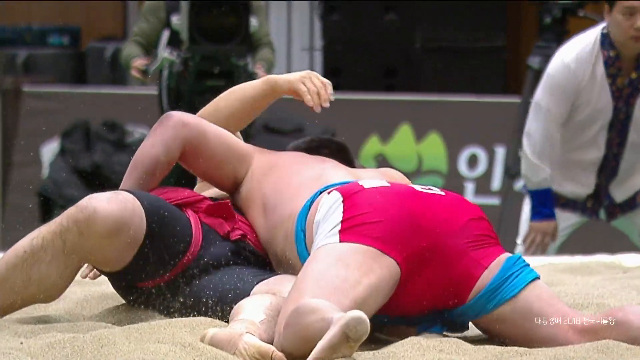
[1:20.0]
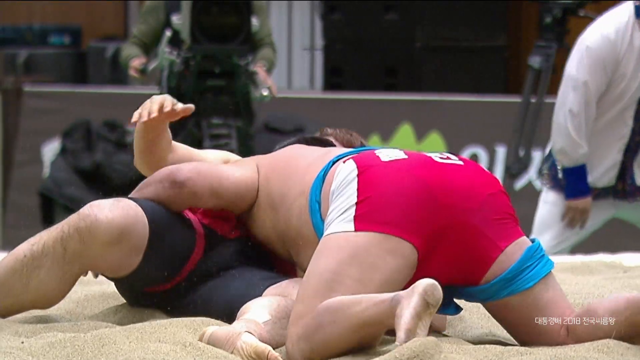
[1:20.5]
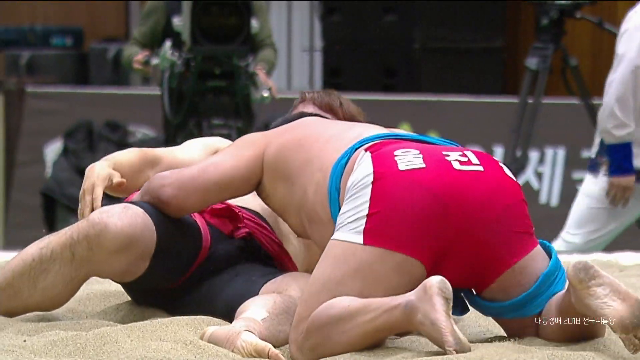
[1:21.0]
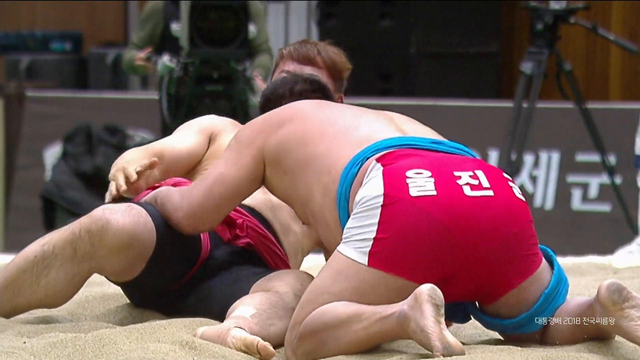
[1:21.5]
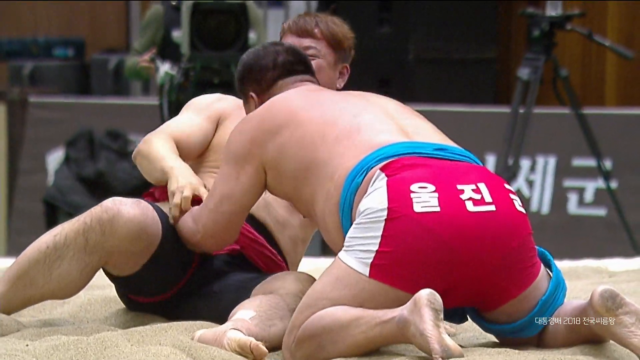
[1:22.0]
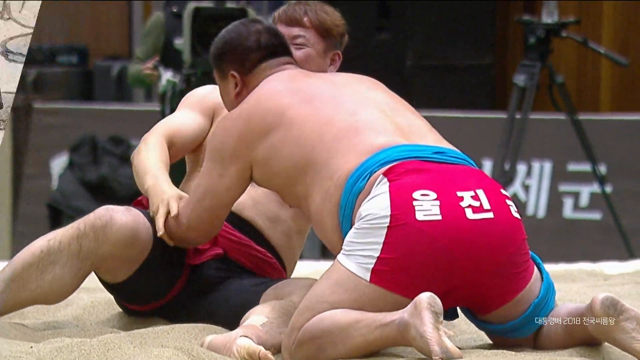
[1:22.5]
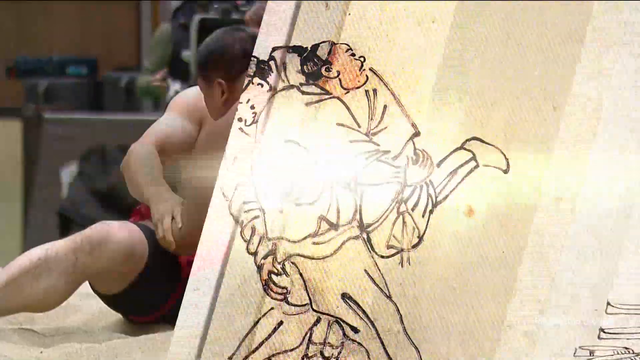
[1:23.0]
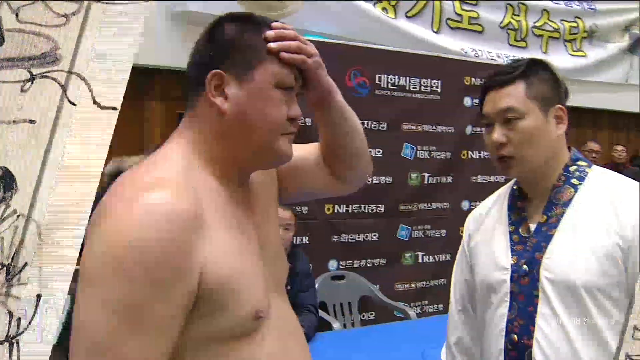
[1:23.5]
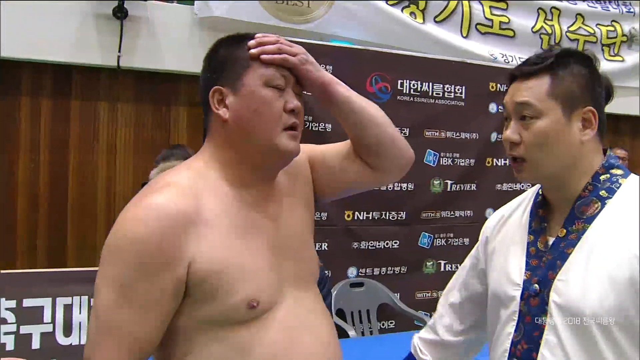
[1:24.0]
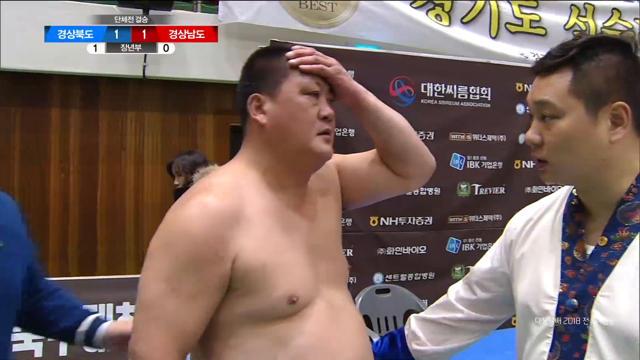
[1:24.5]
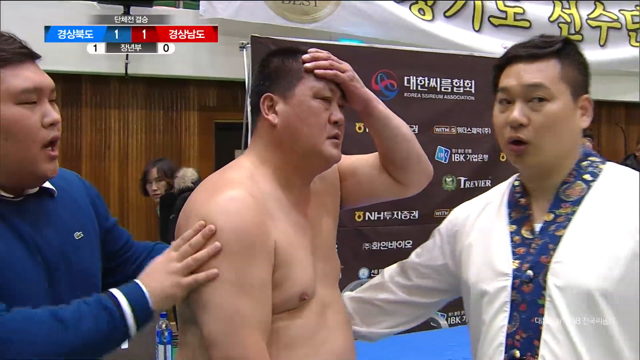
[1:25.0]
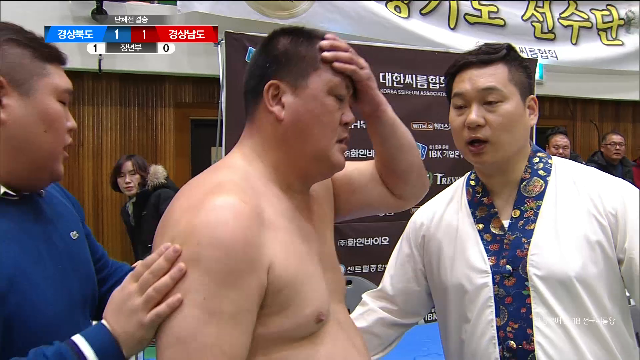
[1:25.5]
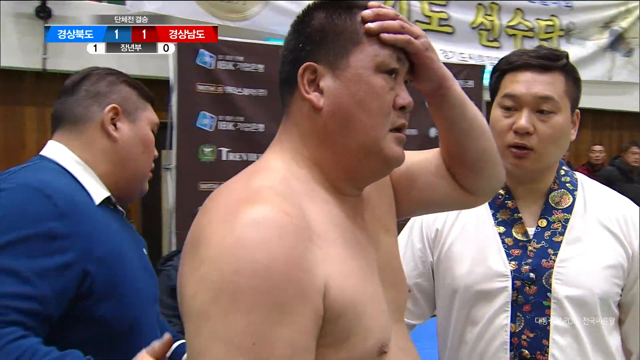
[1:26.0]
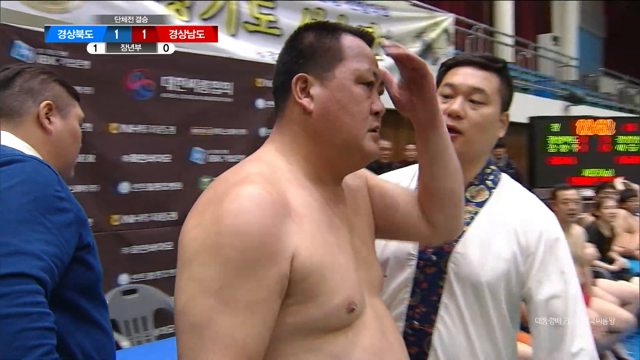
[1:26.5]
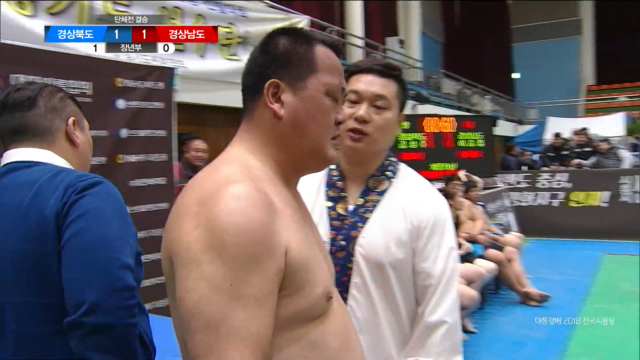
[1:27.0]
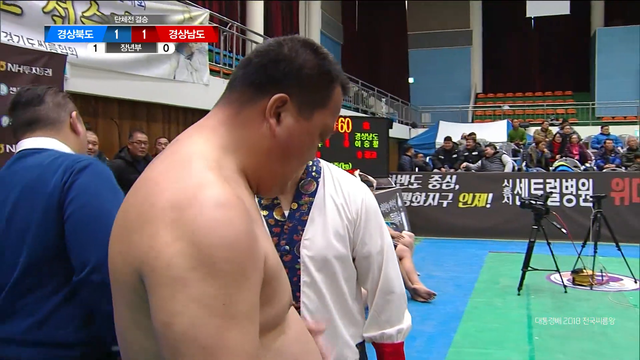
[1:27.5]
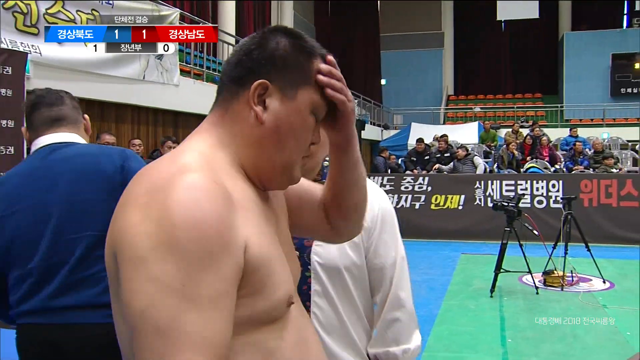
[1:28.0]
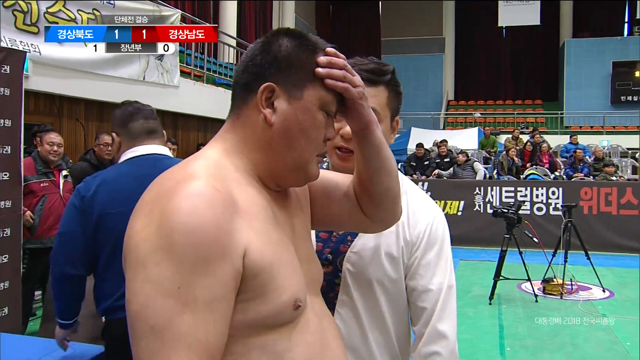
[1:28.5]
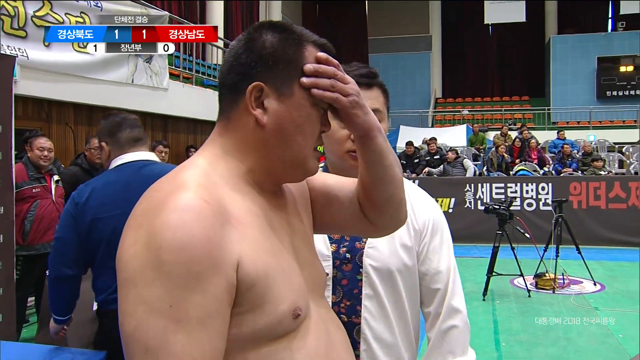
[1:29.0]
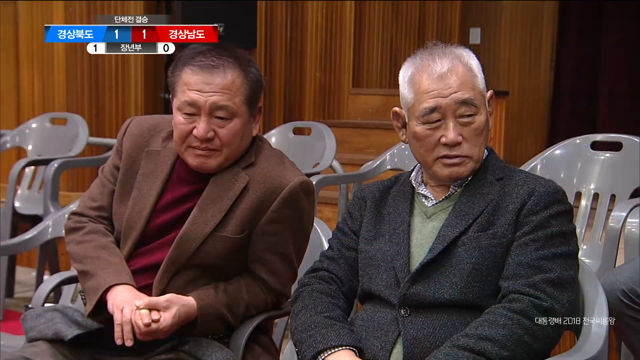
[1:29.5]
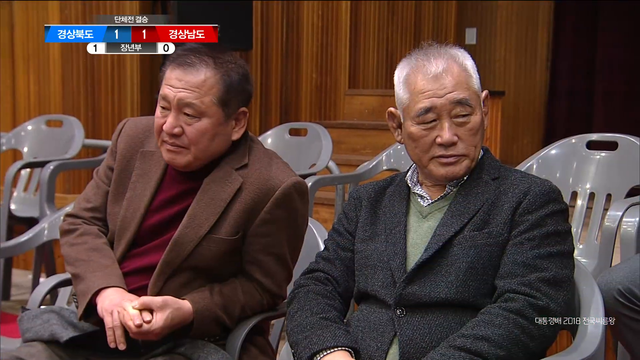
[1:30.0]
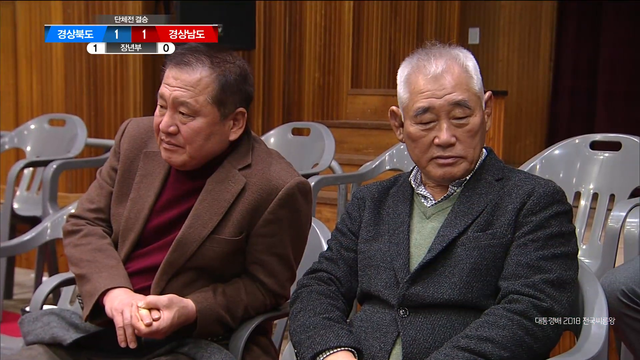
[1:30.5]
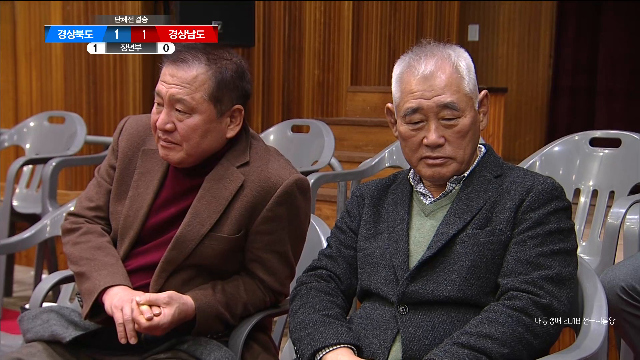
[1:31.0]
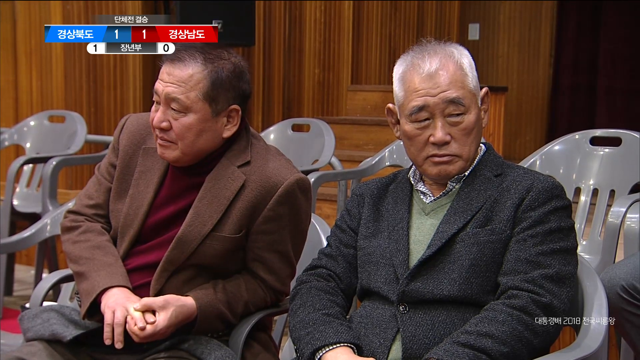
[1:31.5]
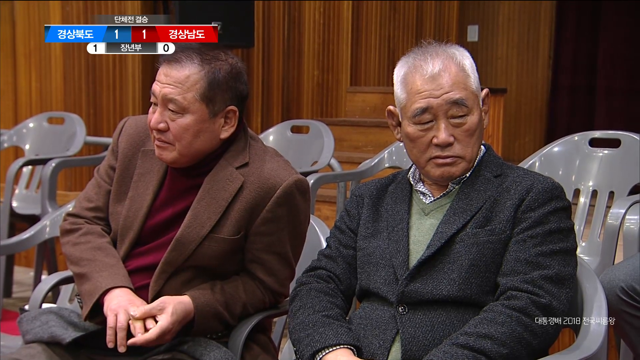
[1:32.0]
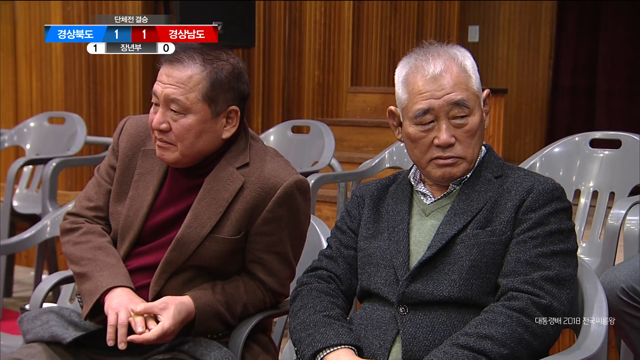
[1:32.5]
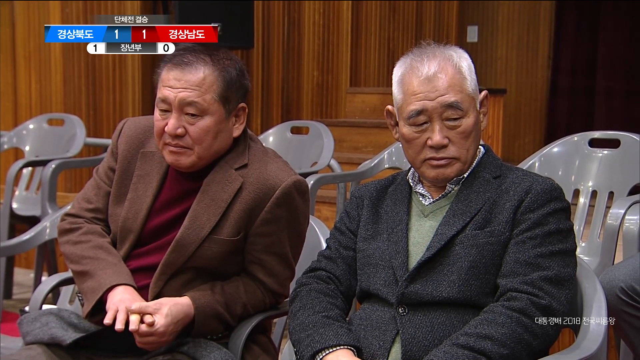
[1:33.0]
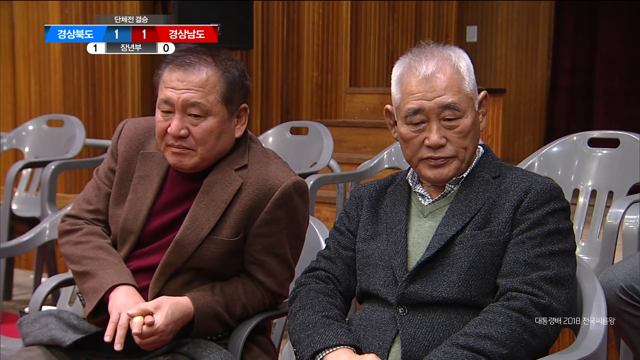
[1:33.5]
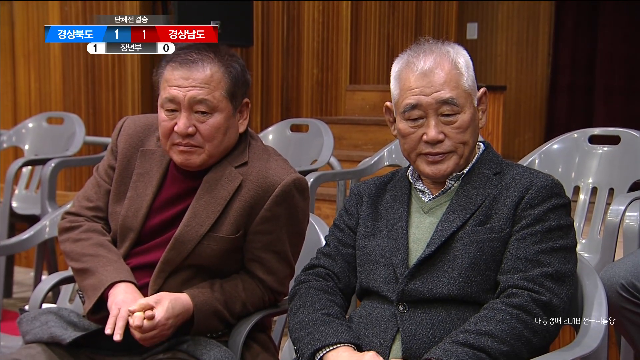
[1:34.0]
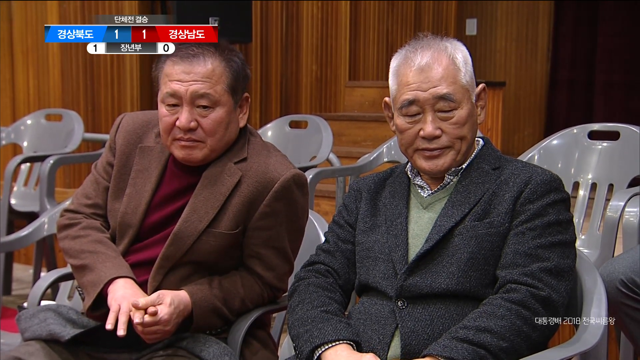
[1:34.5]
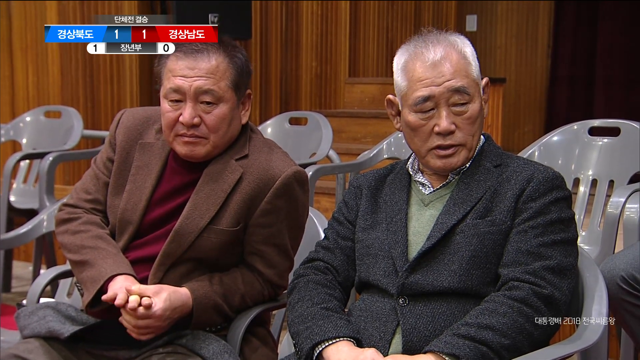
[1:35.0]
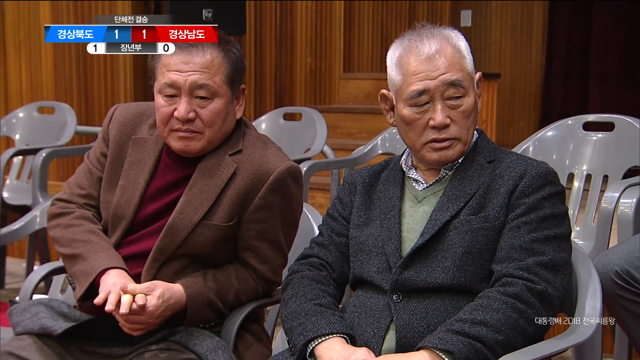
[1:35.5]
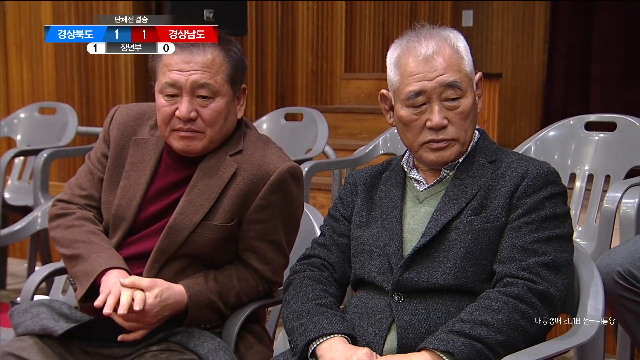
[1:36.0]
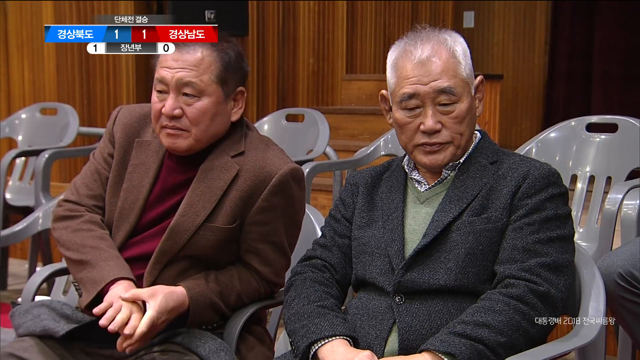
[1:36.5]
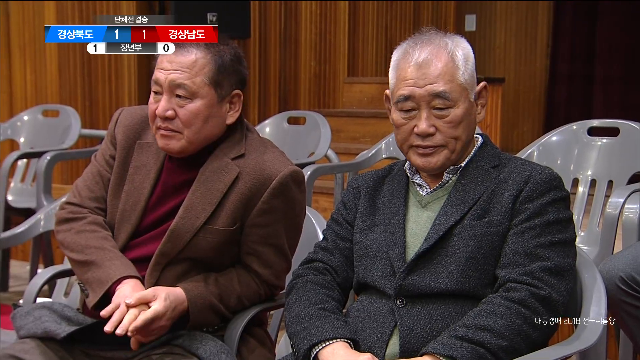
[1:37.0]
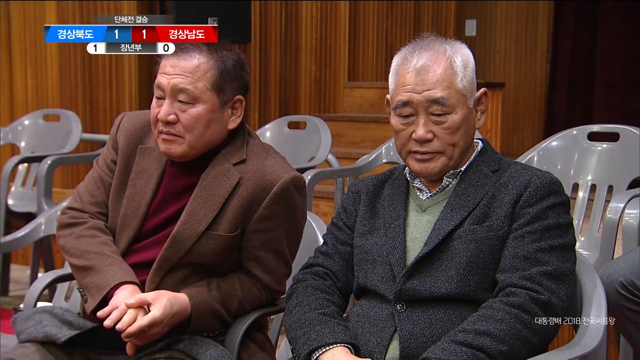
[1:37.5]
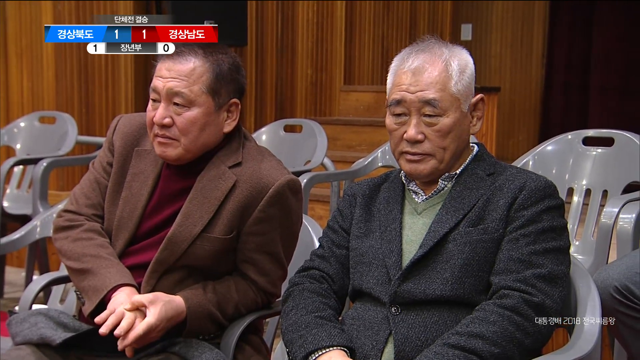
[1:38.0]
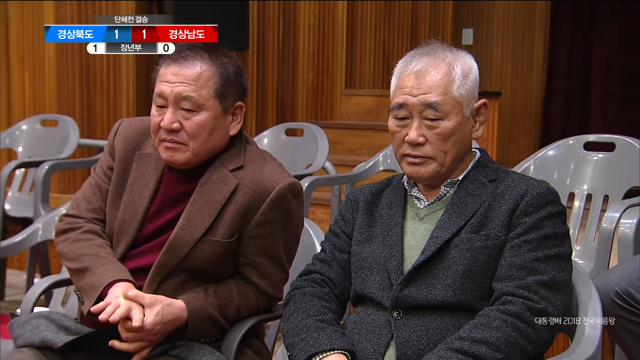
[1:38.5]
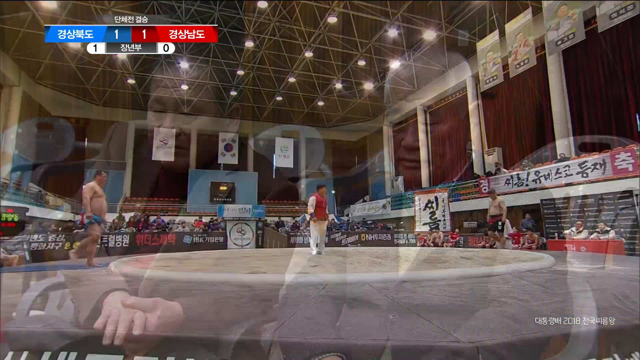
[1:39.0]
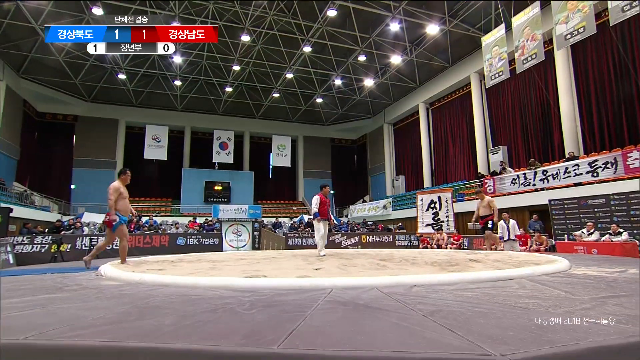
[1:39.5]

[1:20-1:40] The slow-motion replay continues with both men on the ground as they start to get up from the sandy ground. The screen transitions to the sideline, where the man is still holding his forehead with his left hand and is still being comforted by two other men. He removes his left hand from his forehead and begins to walk back towards the stage, but then puts his left hand back on his forehead. Two old men are sitting in gray plastic chairs, with several empty gray plastic chairs around them. The man on the left wears a brown suit and a maroon shirt, has black hair, and appears to have a jacket draped across his lap. The man on the right wears a gray suit over a green sweater over a checkered collared shirt and has white, receding hair. Then the ring is shown, with the two wrestlers approaching each other in it.